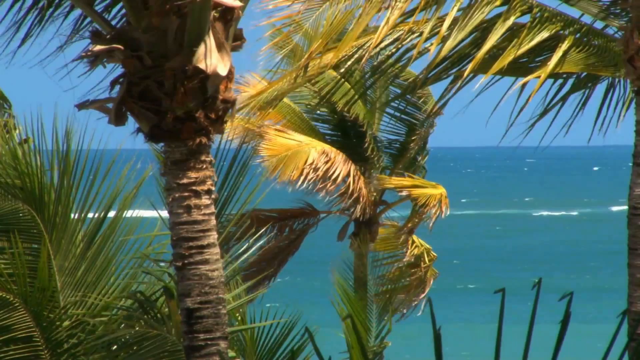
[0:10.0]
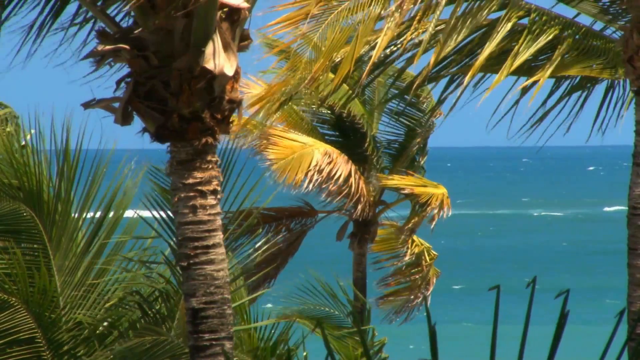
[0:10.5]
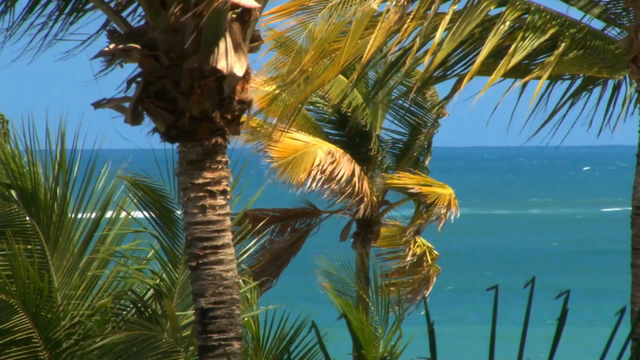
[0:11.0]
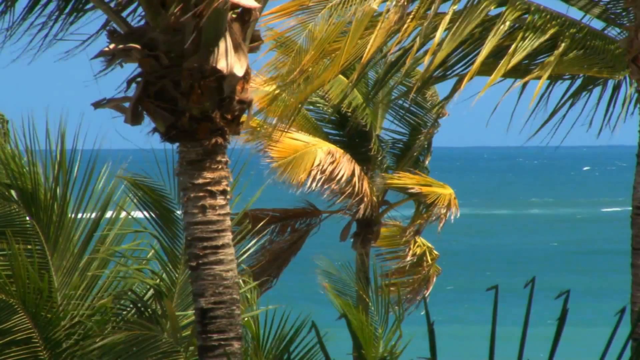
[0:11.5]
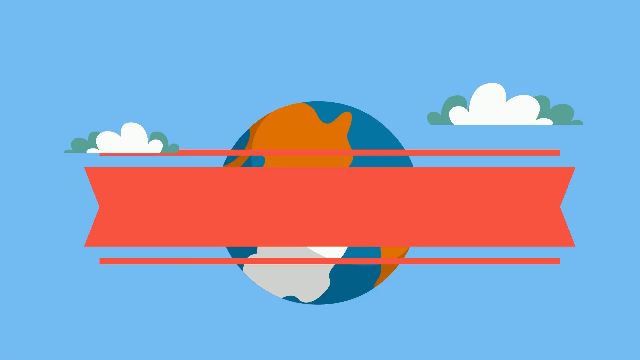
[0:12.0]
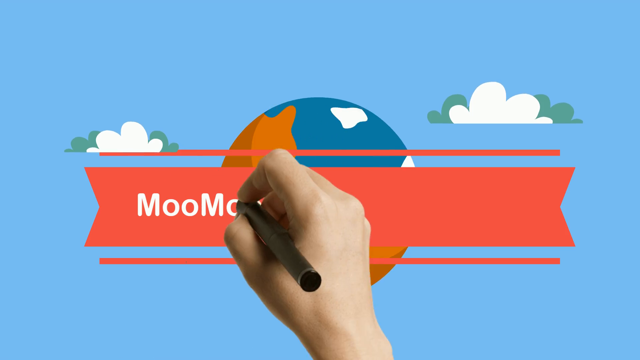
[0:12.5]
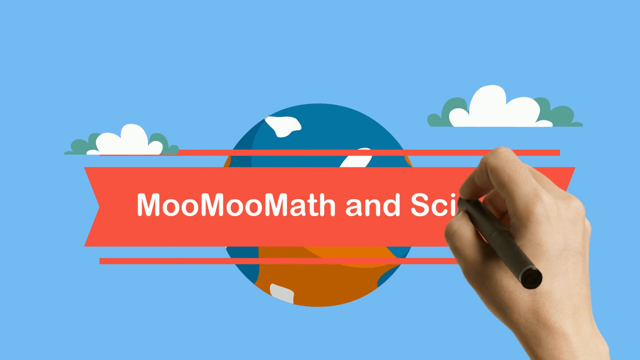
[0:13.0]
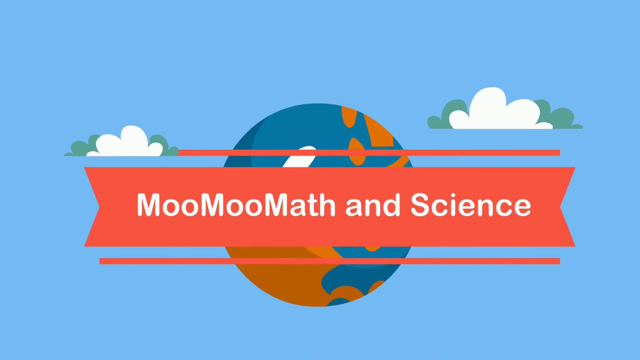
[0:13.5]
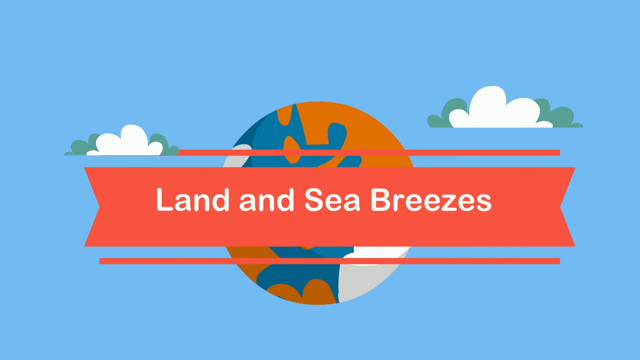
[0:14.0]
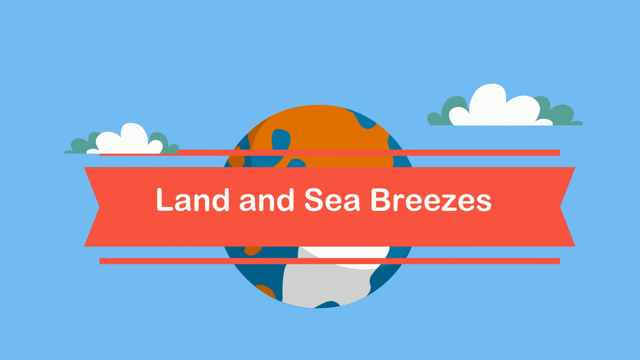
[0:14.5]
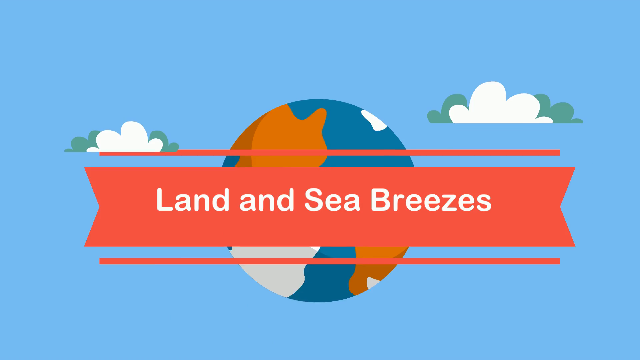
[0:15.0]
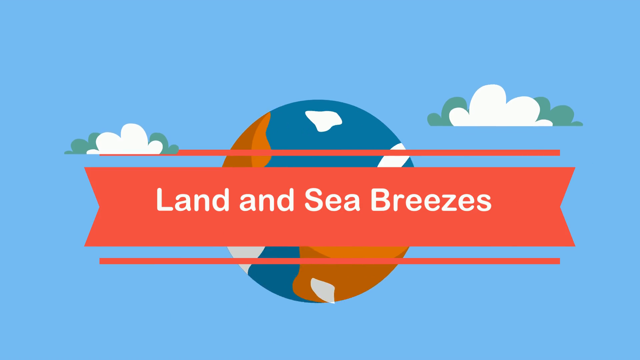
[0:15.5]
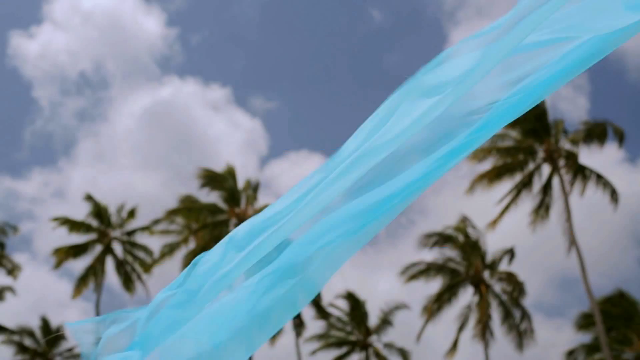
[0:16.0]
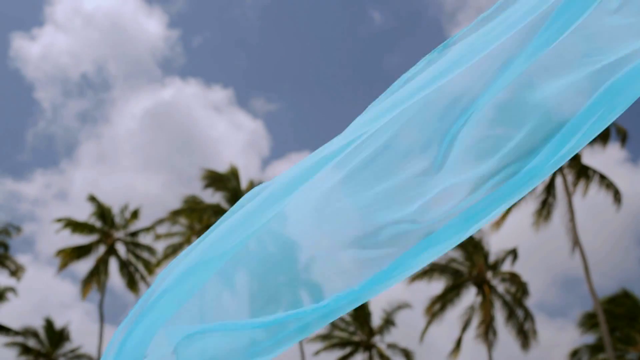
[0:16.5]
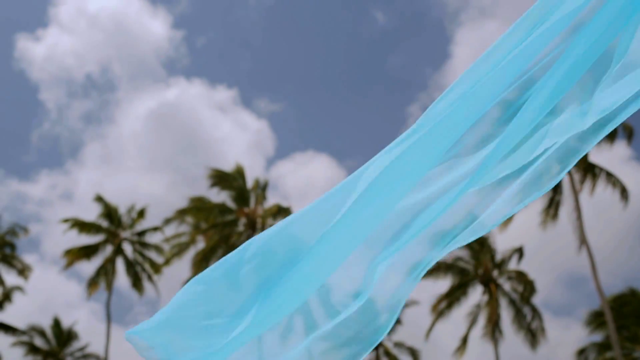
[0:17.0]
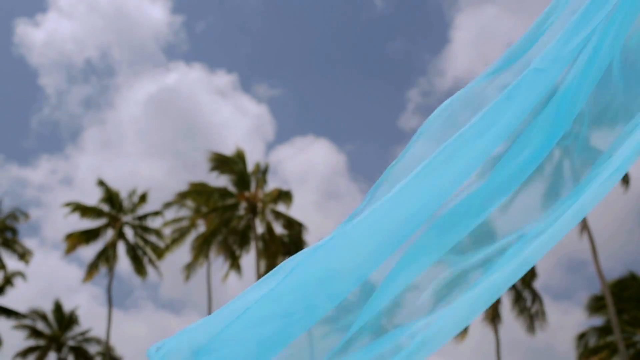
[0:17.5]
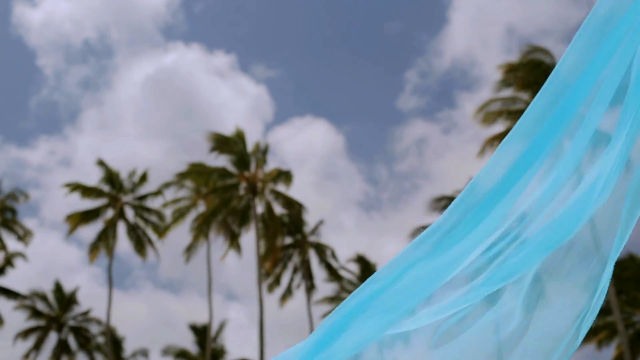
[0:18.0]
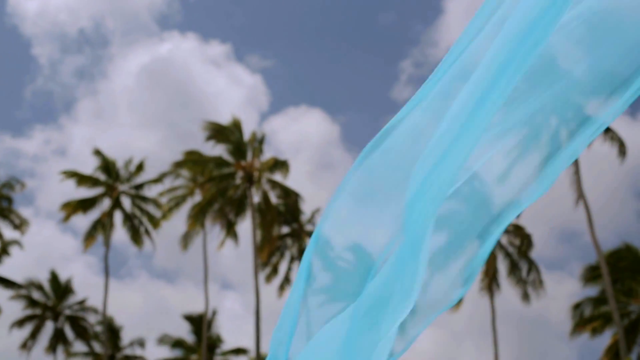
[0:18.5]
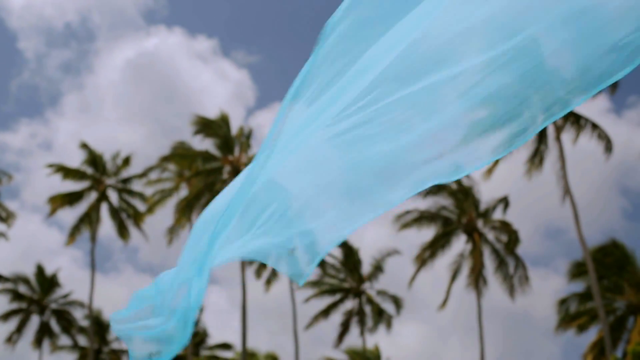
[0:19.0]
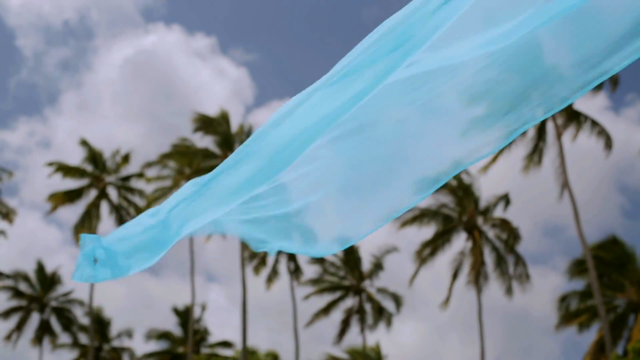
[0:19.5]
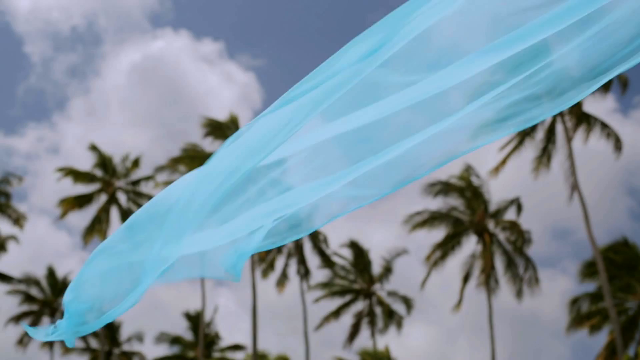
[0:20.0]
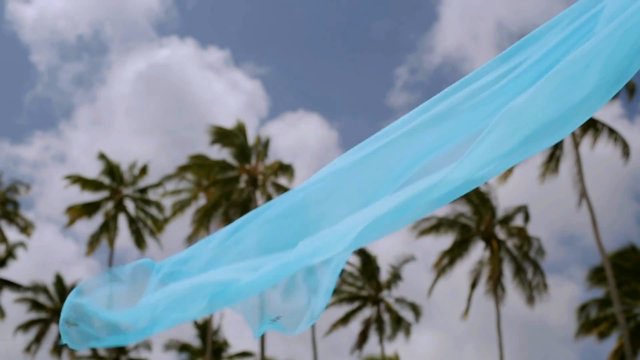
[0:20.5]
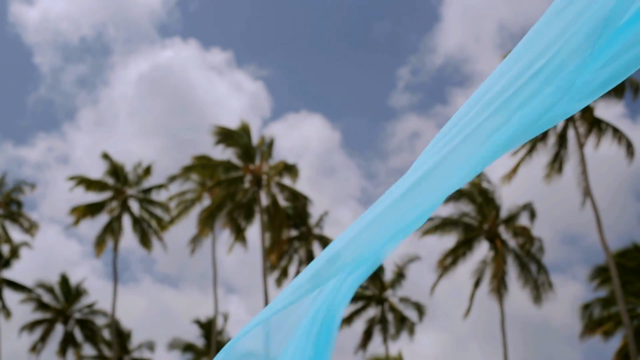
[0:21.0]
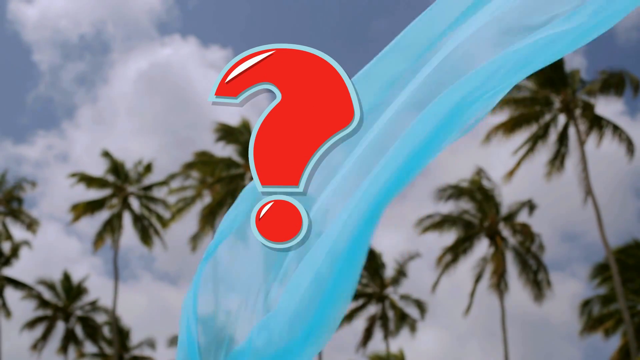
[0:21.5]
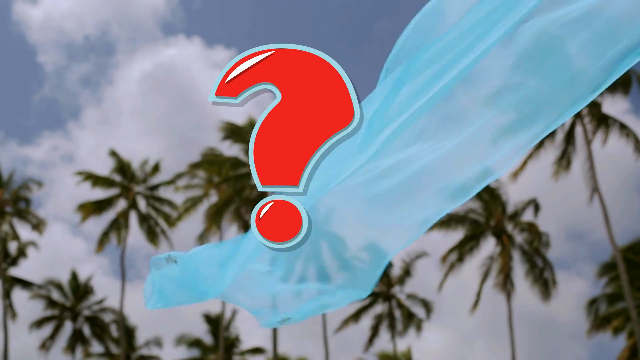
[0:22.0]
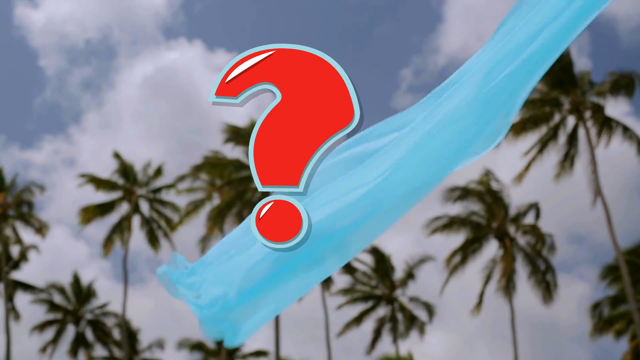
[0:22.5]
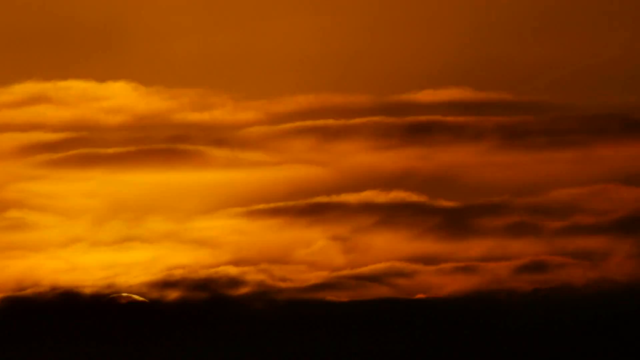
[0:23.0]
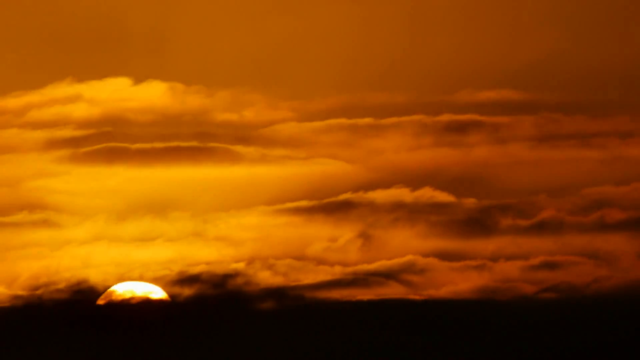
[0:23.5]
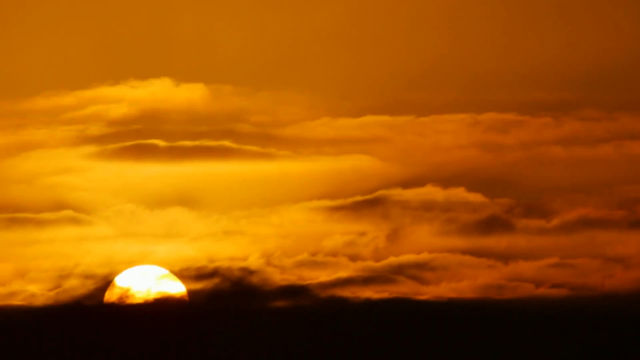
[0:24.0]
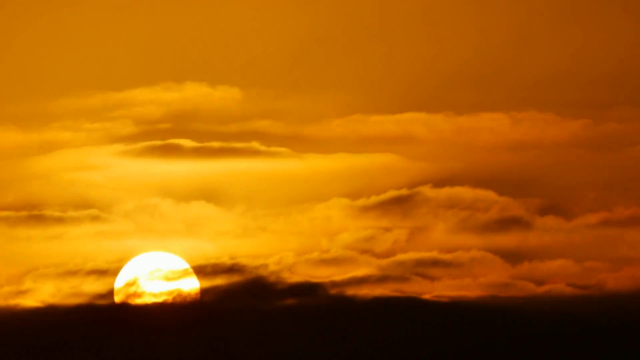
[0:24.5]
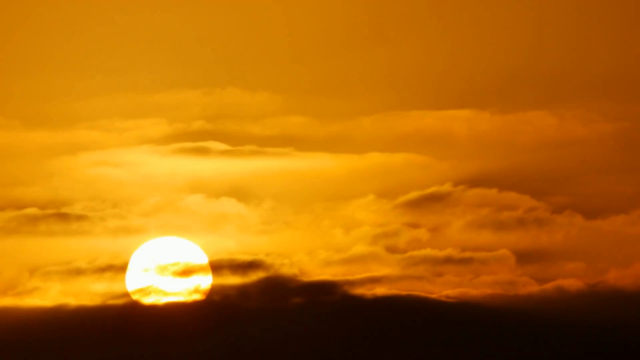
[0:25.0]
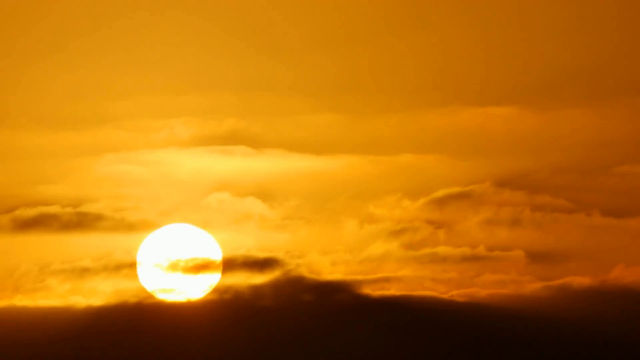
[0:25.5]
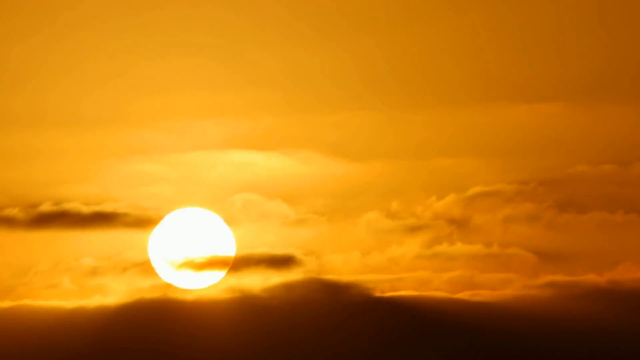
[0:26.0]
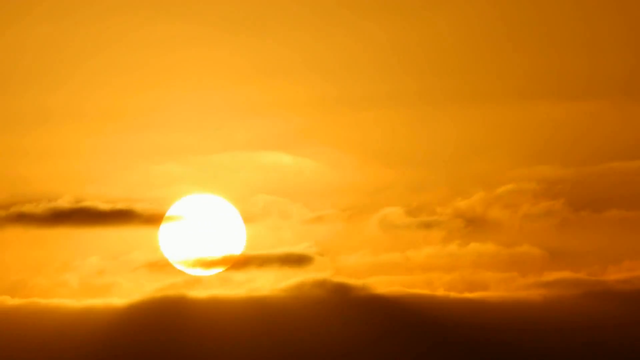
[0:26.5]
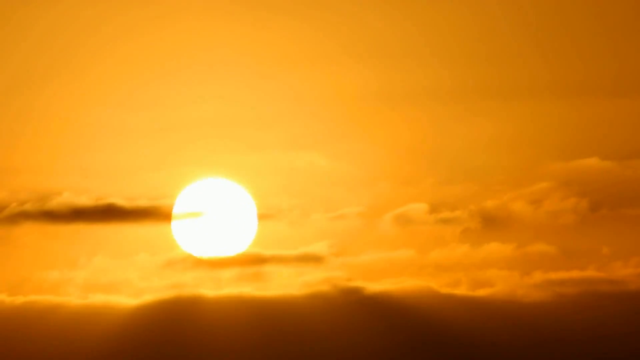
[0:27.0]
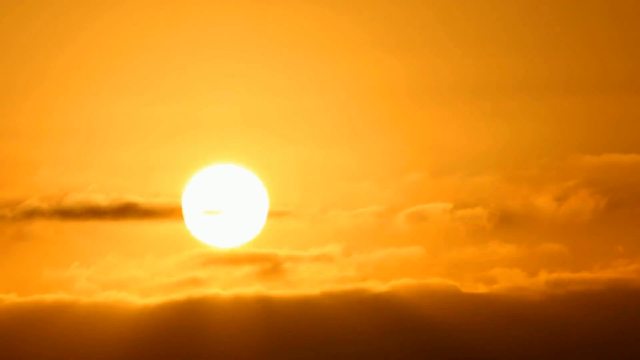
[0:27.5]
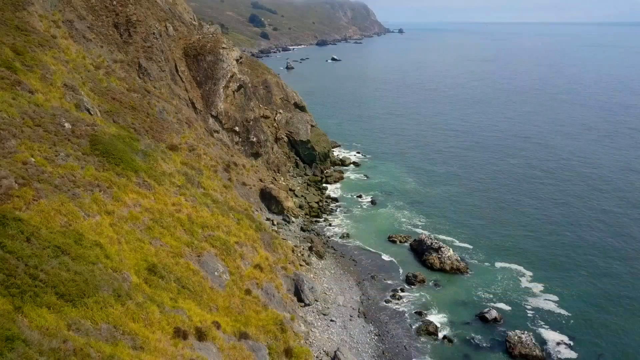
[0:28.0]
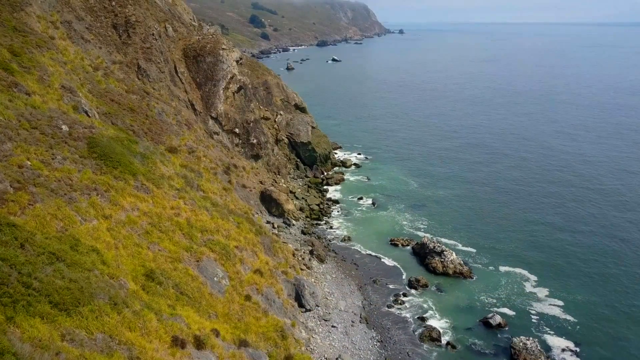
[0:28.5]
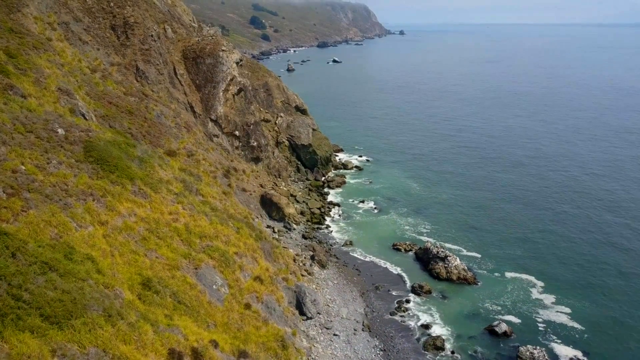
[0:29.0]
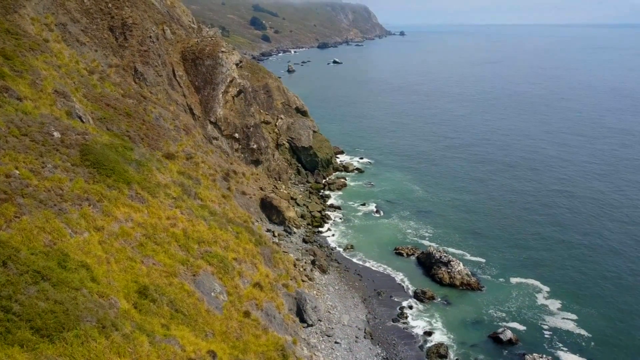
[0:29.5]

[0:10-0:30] The beach scene continues, with the wind blowing the trees and leaves to the left and waves crashing in the background. The camera then pans to an animation of a globe with a banner in front of it. Behind the banner are two shapes that may be bushes or clouds, all set against a light blue background. A human hand holding a black pen comes up, and the text "Moo Moo Math and Science" appears in white on a red banner. The text on the banner then changes to "land and sea breezes". The globe keeps spinning while everything else remains static. A close-up of sheer light blue fabric blowing in the wind follows, with lots of tall palm trees and cloudy blue skies behind the fabric. A large red question mark pops up in the center of the screen. A sunrise is shown, with the sun appearing over an orange sky. A seaside cliff is shown.